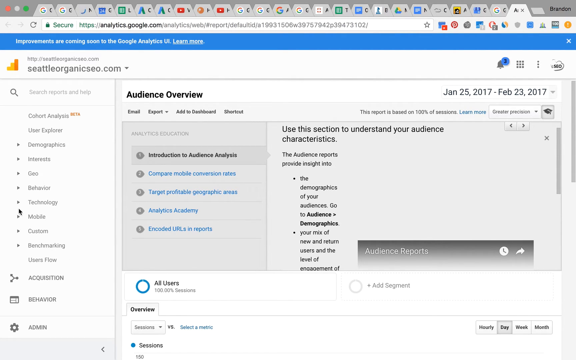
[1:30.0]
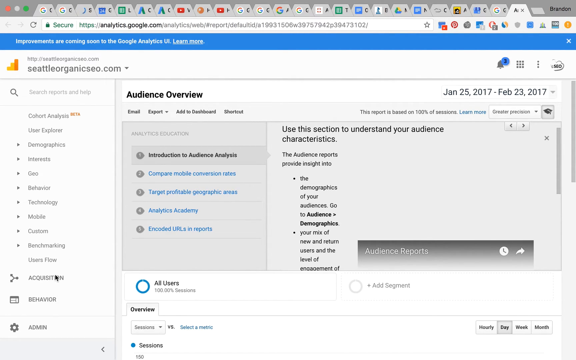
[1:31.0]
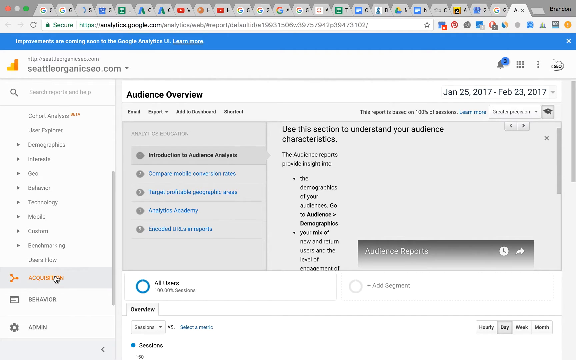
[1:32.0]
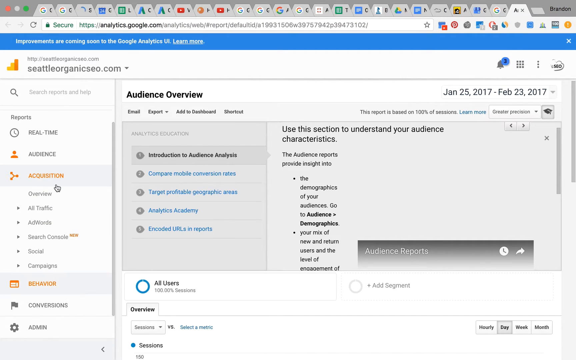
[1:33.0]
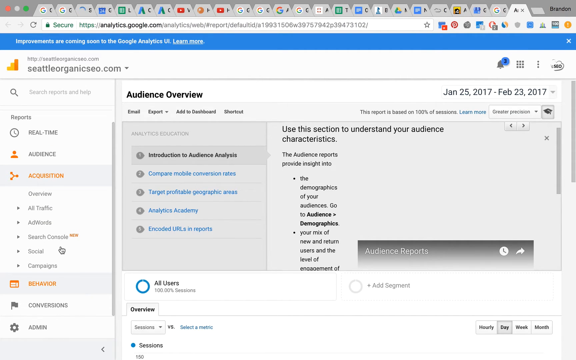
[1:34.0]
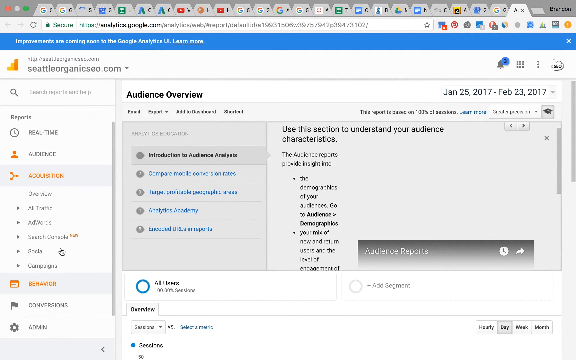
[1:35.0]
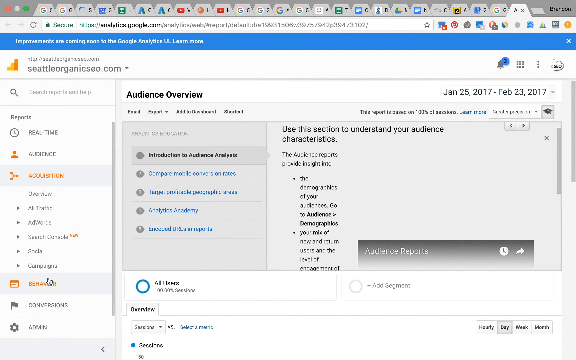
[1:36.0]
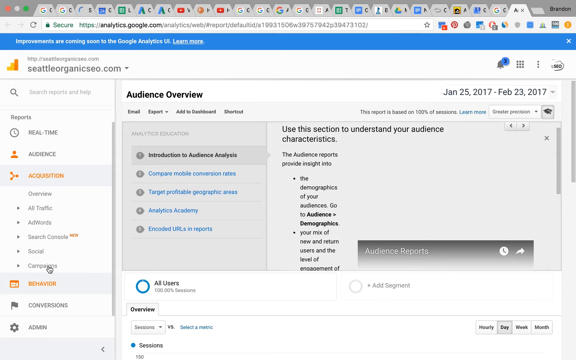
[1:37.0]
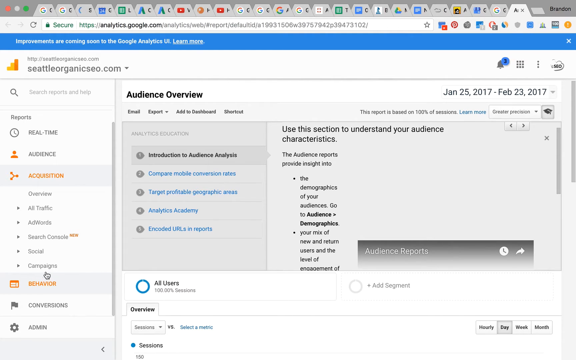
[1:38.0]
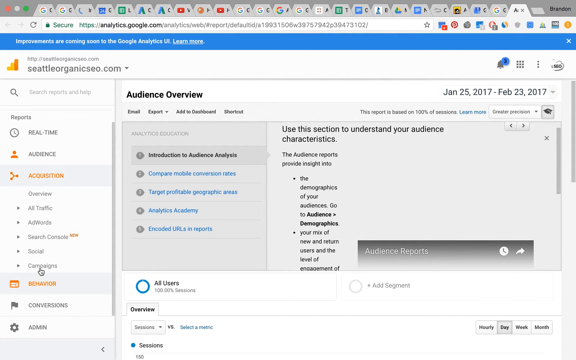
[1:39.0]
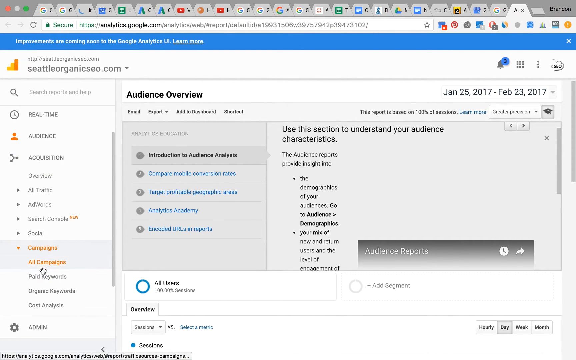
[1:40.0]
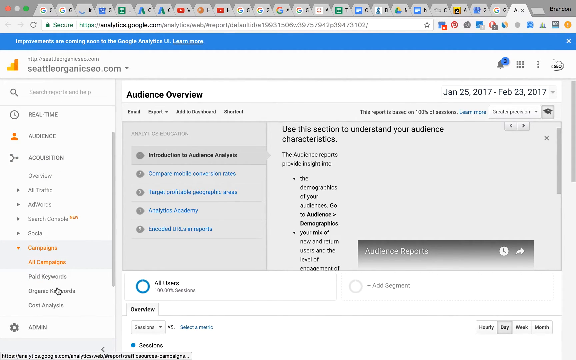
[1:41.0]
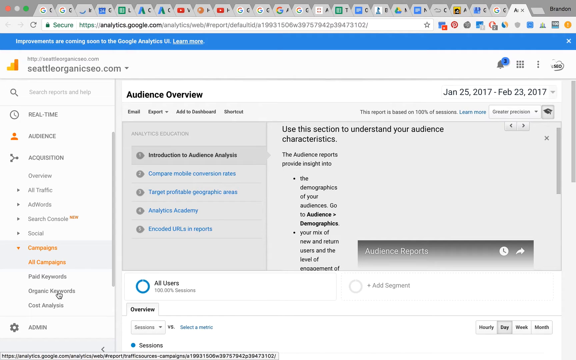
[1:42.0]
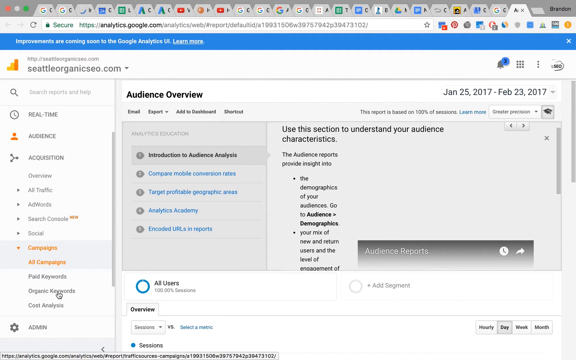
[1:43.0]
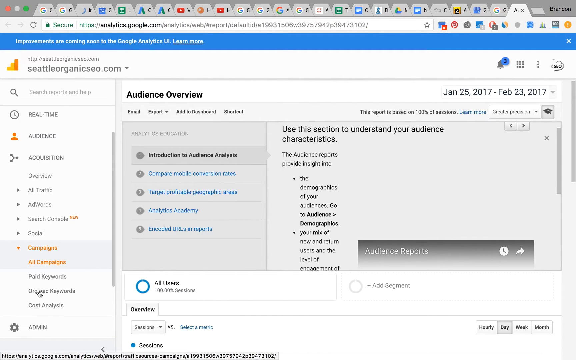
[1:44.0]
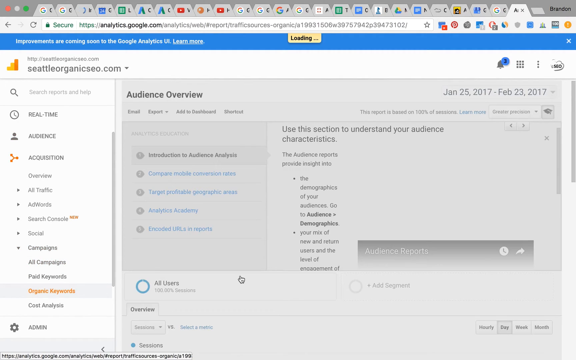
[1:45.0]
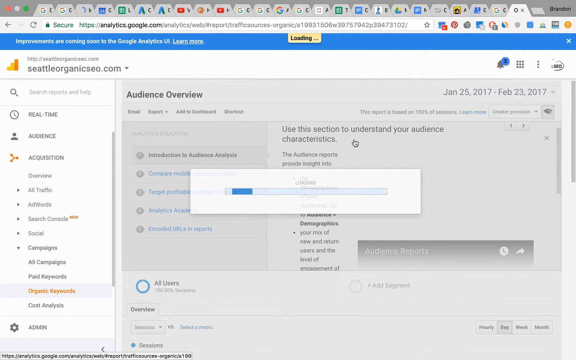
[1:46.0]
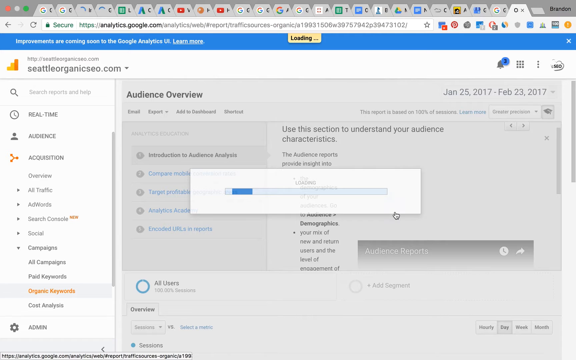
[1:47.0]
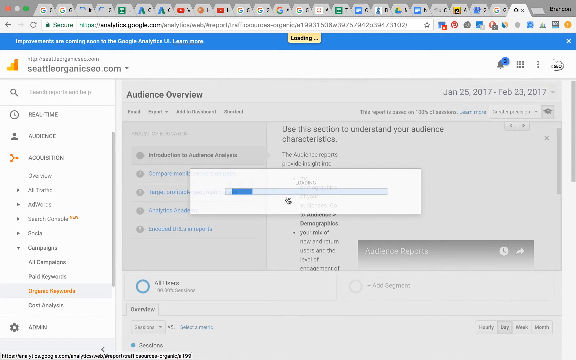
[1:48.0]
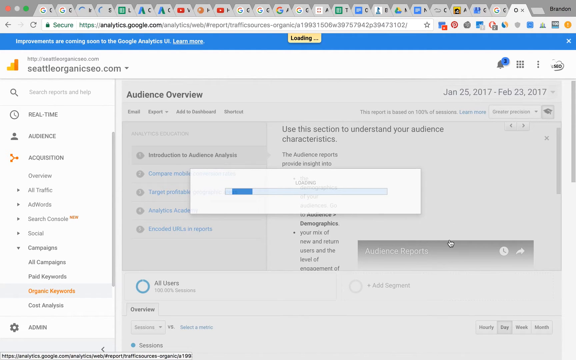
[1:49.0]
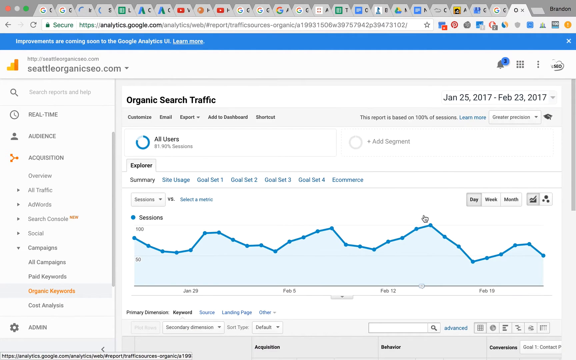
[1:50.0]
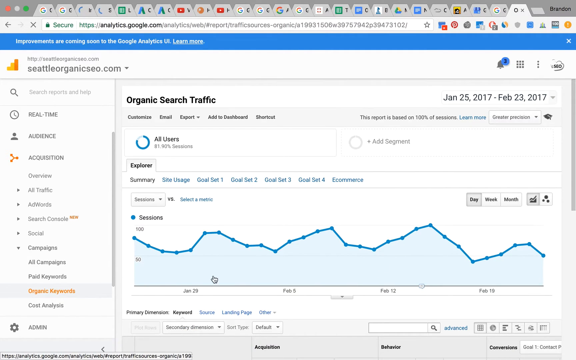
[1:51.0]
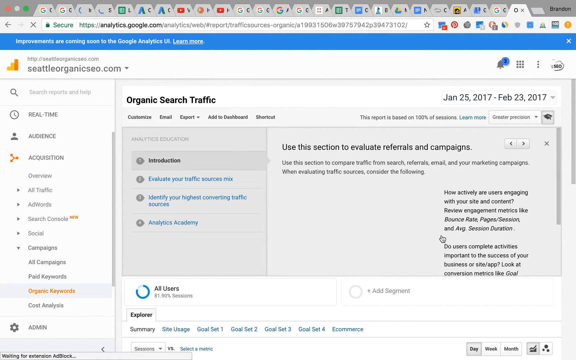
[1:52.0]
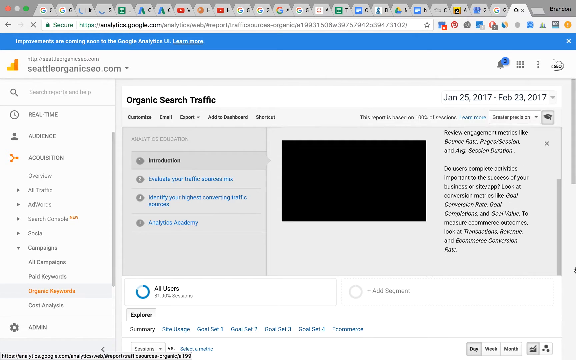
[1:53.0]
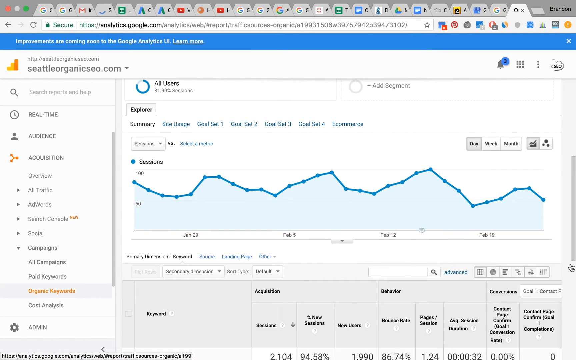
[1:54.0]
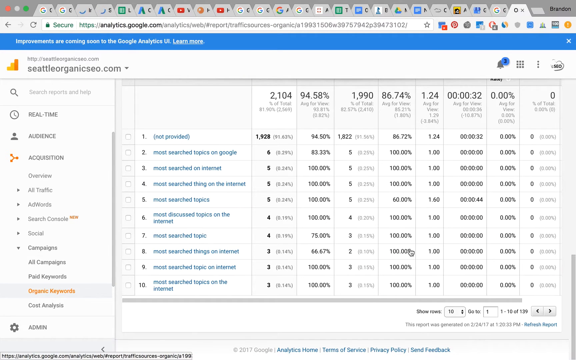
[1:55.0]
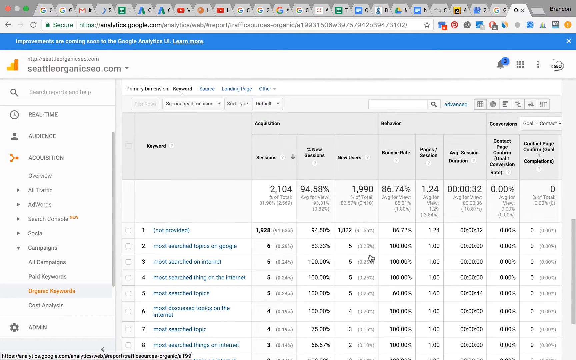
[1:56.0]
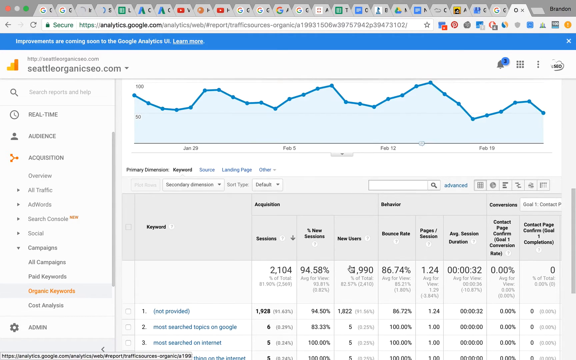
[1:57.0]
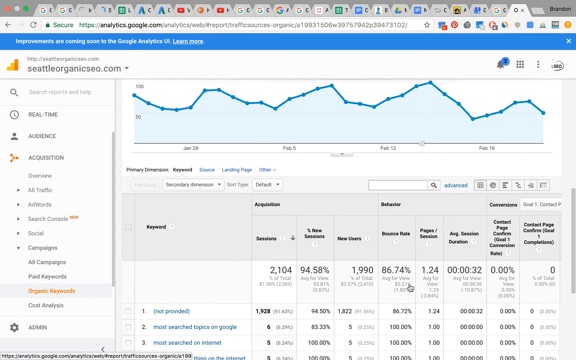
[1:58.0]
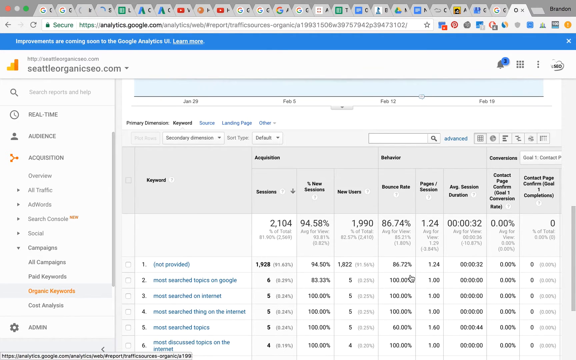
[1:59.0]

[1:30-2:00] An audience overview page on the computer screen is for seattleorganicseo.com, with a date in the upper right-hand corner reading "January 25th 2017 to February 23rd 2017". On the left side, the user moves down a drop-down menu, past the words "Campaigns" and "all campaigns" in orange font, seemingly deciding what to click, and then clicks "organic keywords". A strip on the screen shows it loading, with the bar getting a little longer. A graph appears for just a few seconds, and then the organic search results come up with what looks like a chart and graph full of numbers and information.